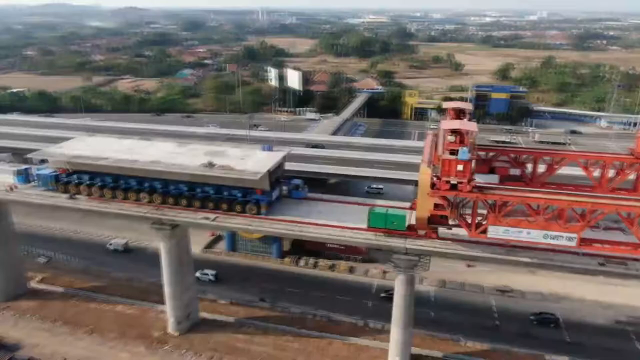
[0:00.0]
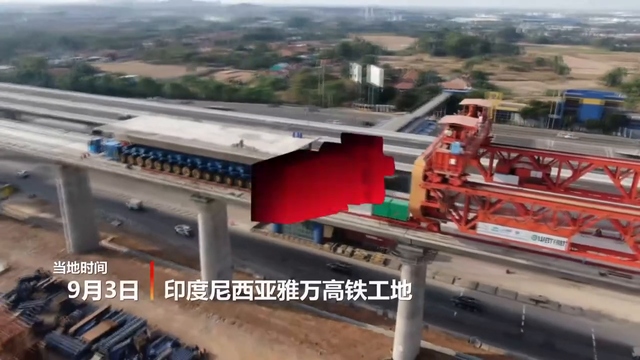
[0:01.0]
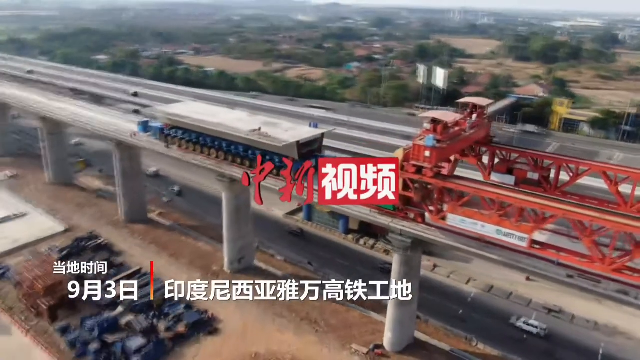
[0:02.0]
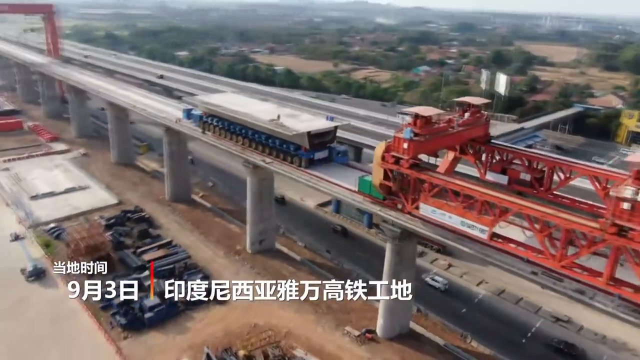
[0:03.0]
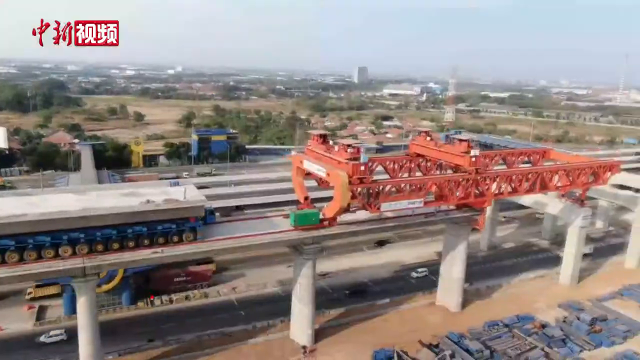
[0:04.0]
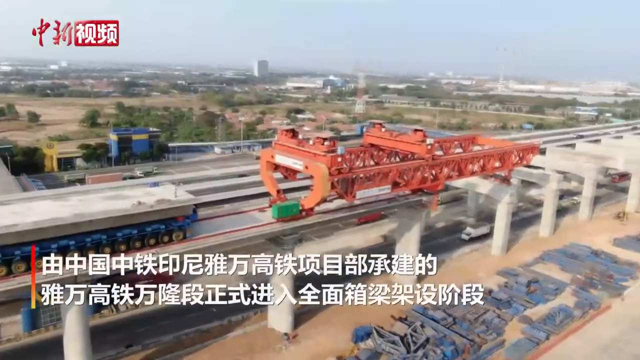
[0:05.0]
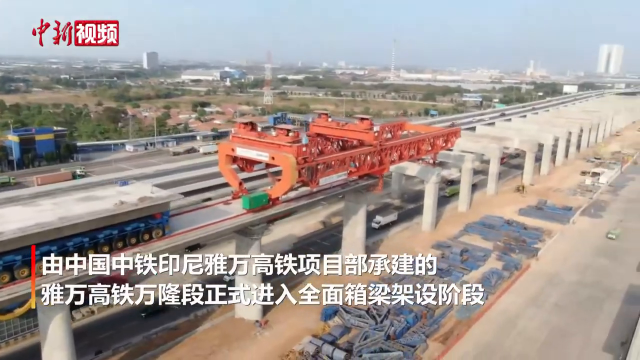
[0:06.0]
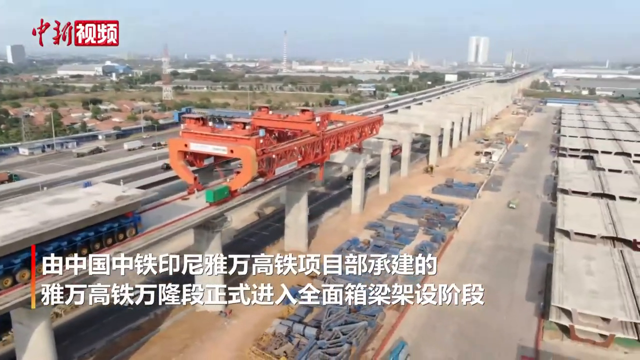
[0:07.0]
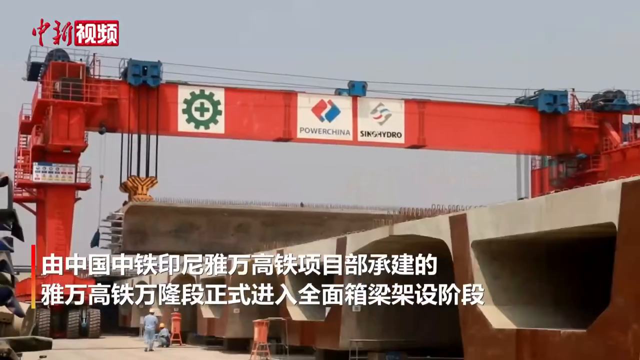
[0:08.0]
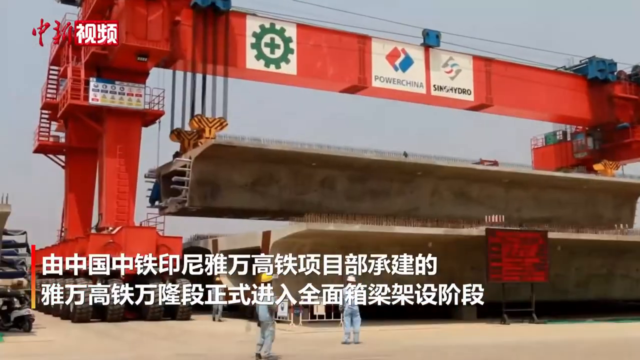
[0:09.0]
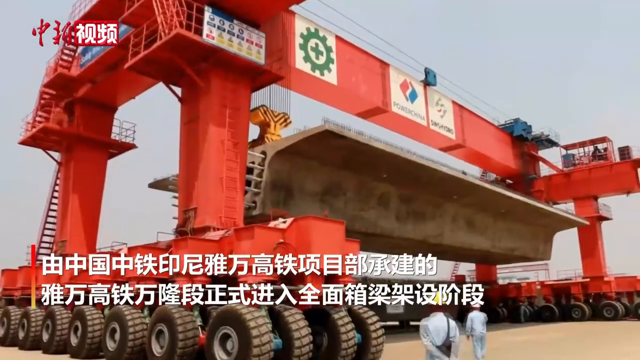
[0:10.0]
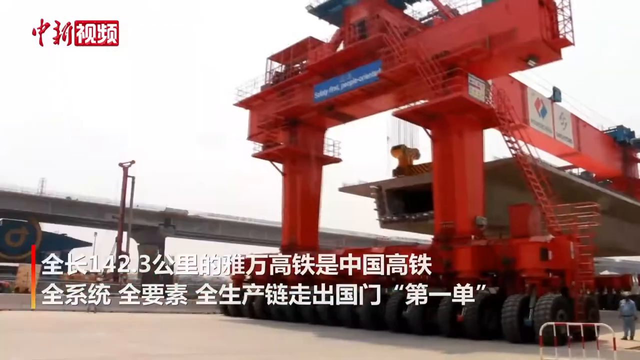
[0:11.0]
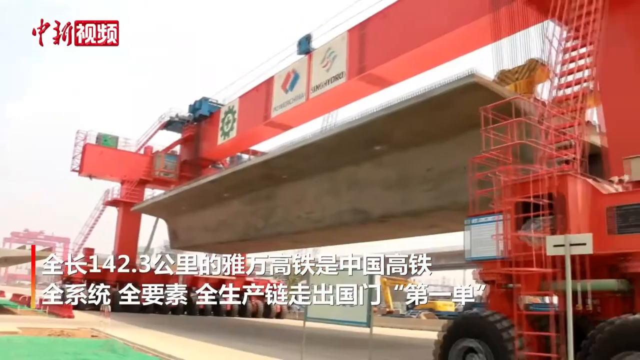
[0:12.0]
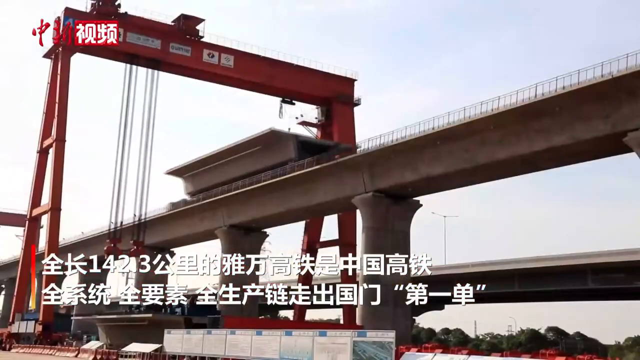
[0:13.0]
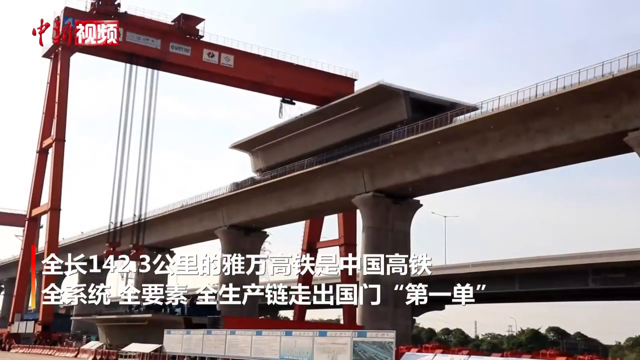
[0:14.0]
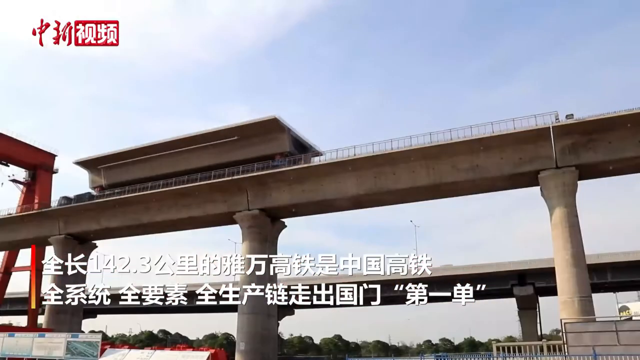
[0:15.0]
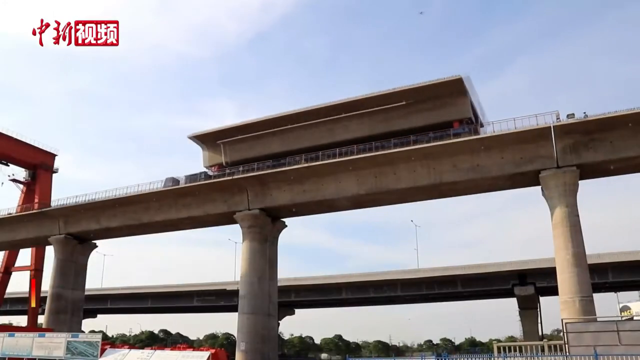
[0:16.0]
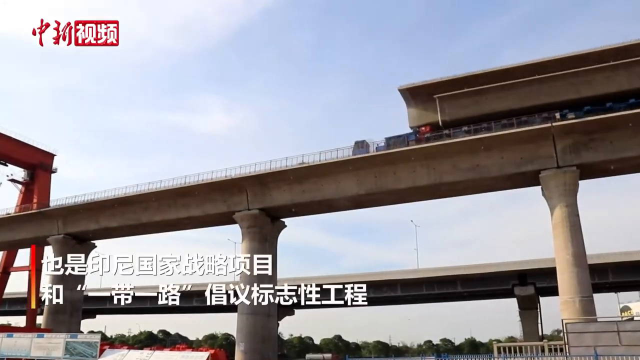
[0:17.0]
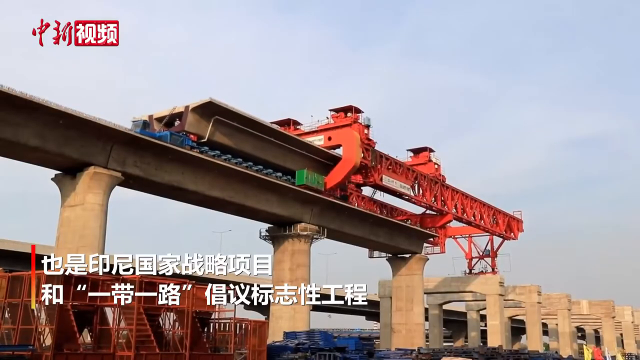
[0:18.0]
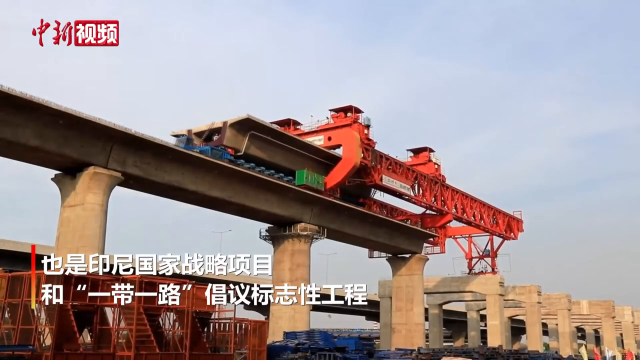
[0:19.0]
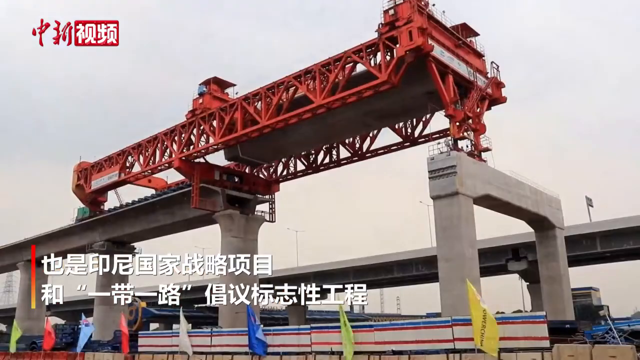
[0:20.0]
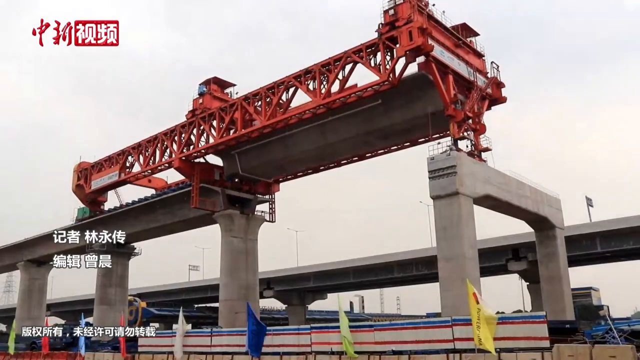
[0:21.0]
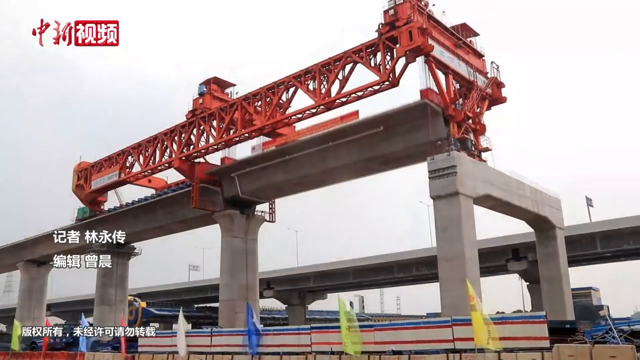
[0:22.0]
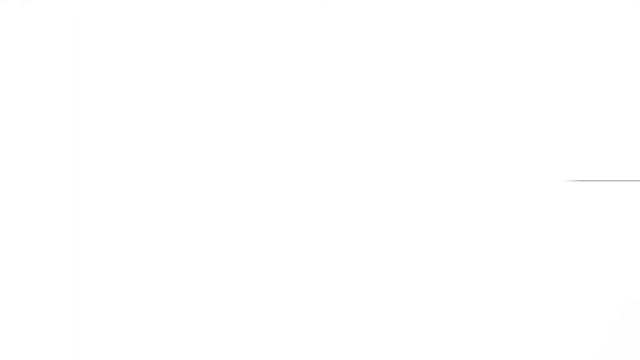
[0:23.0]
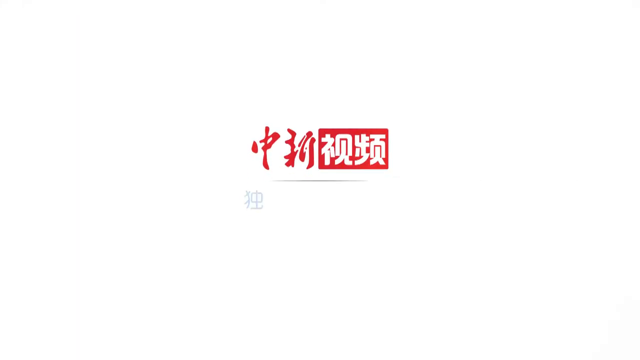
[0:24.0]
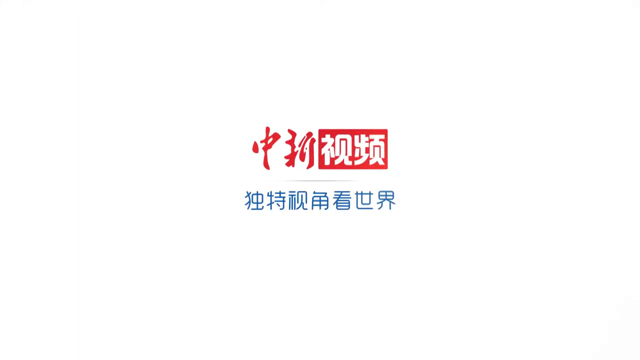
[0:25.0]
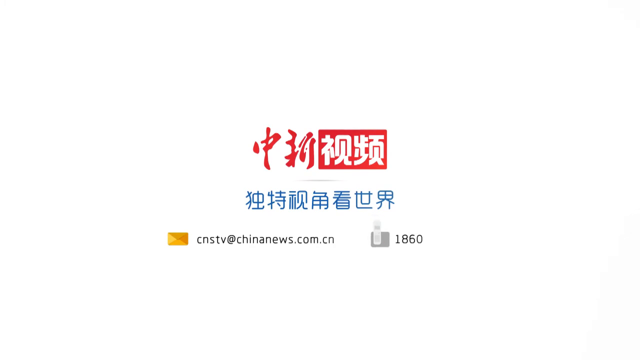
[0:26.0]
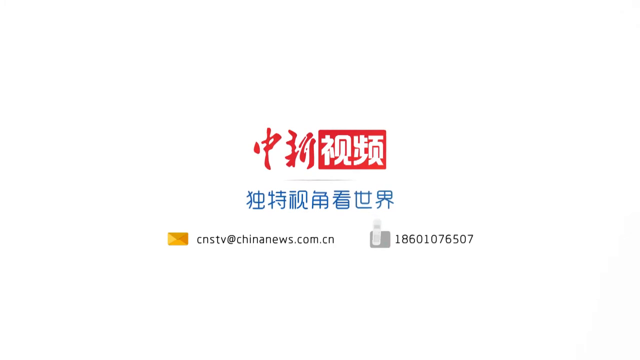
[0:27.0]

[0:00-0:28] A city is shown with infrastructure being added, including more highway. Large pieces of structure have been constructed to create an overpass, and it looks like a crane is being used.